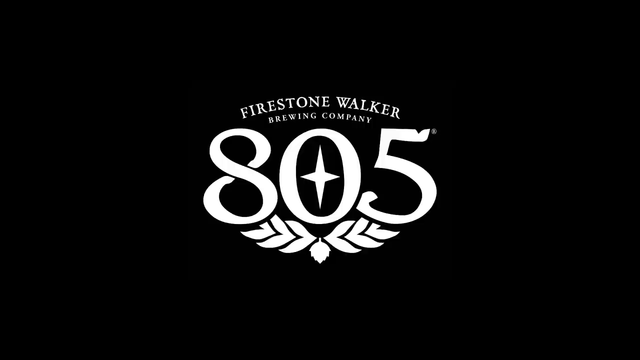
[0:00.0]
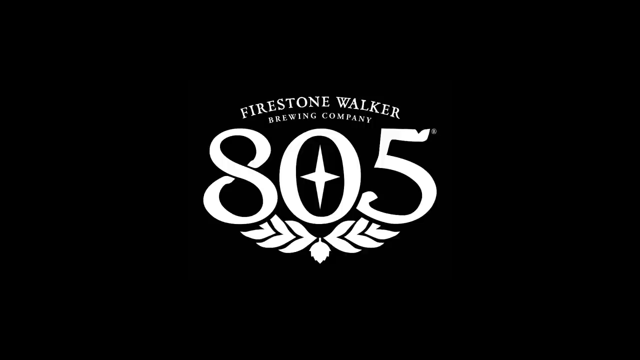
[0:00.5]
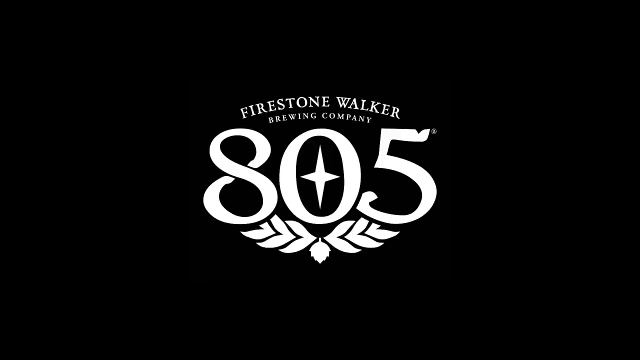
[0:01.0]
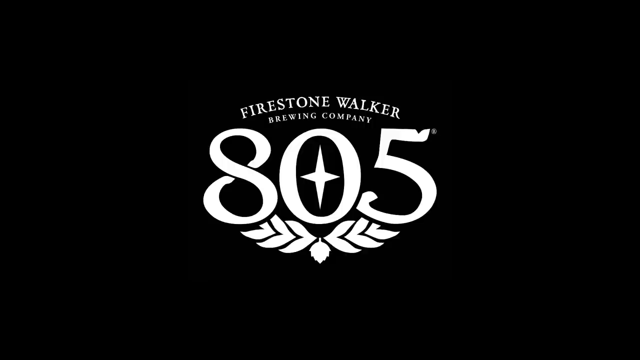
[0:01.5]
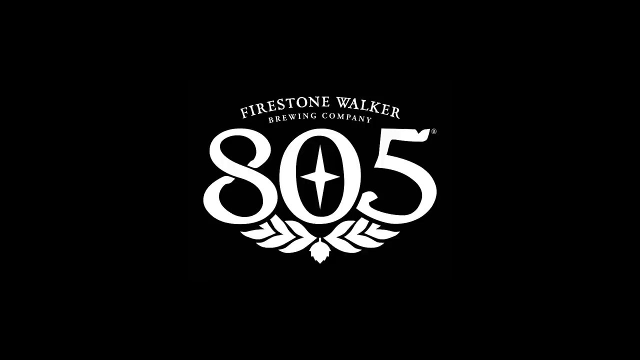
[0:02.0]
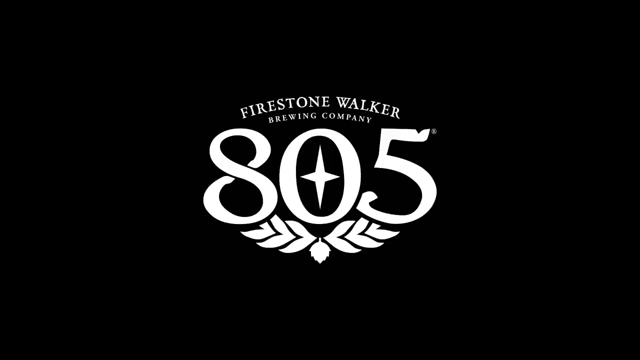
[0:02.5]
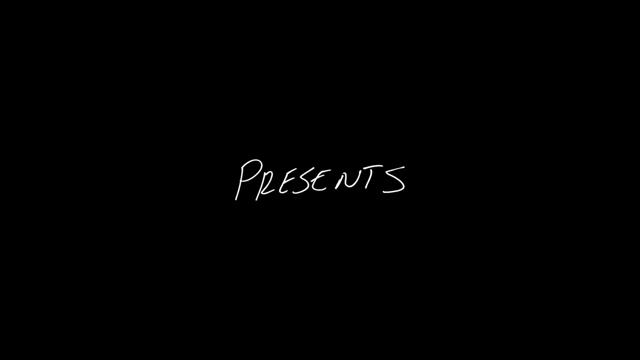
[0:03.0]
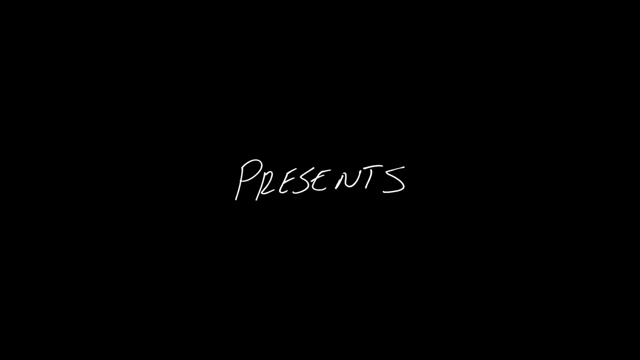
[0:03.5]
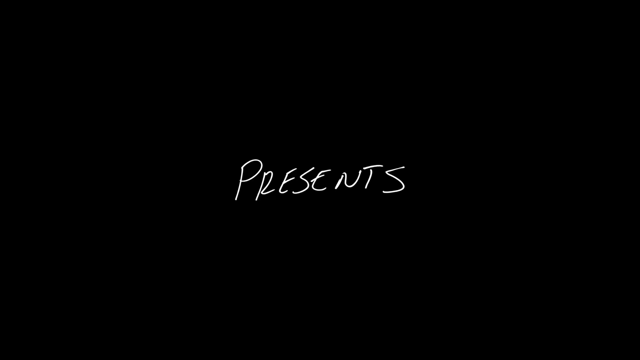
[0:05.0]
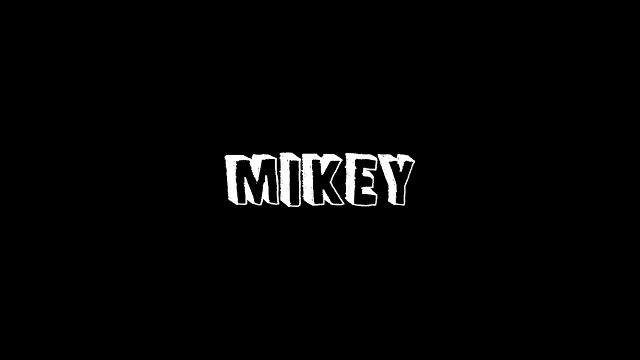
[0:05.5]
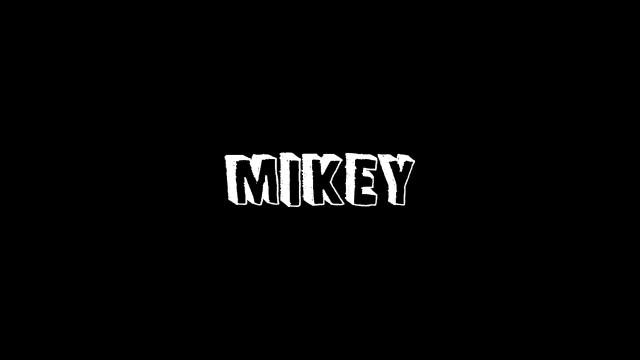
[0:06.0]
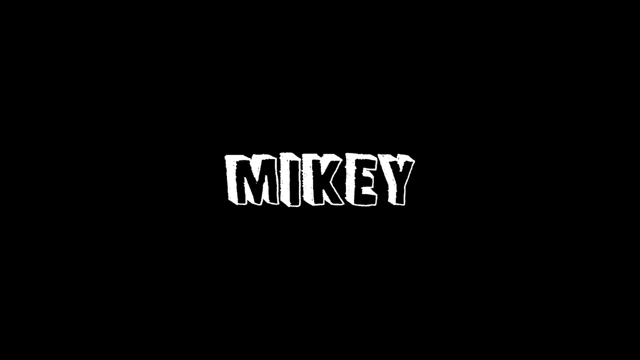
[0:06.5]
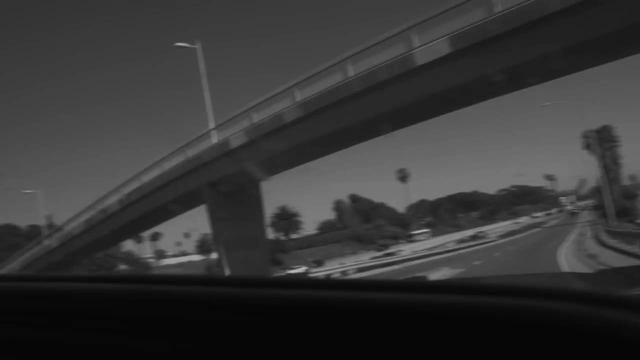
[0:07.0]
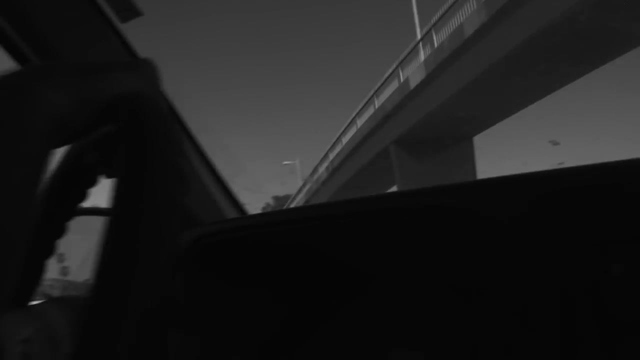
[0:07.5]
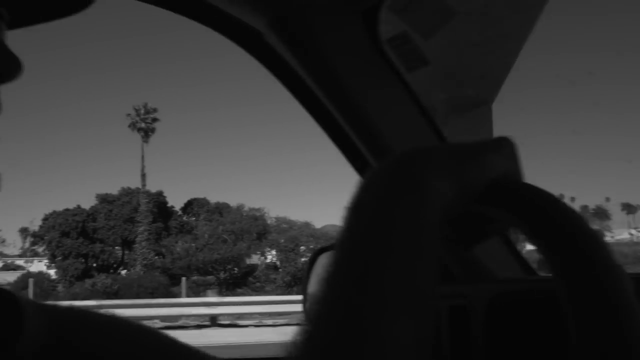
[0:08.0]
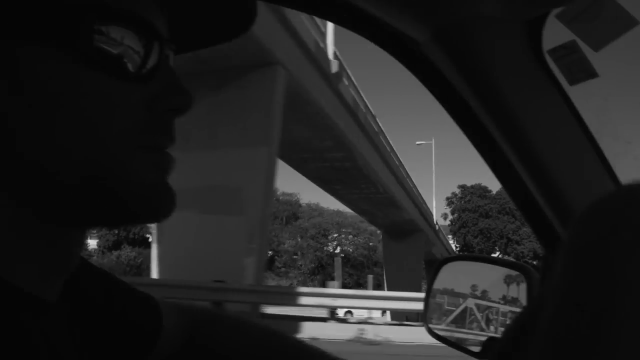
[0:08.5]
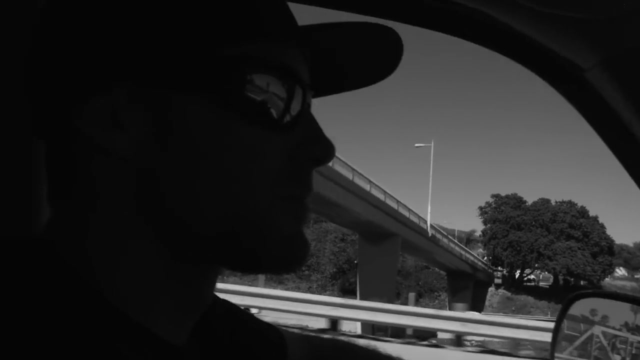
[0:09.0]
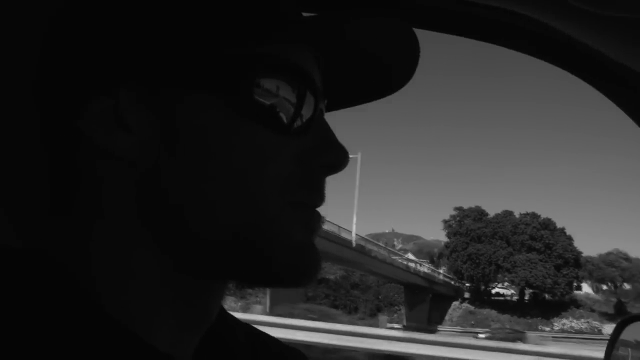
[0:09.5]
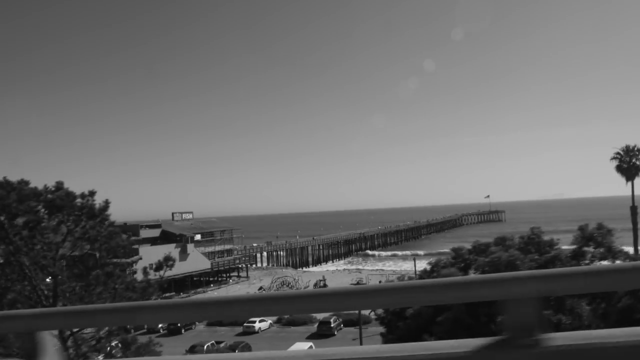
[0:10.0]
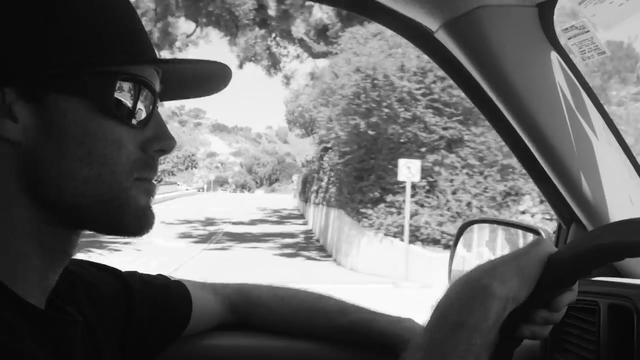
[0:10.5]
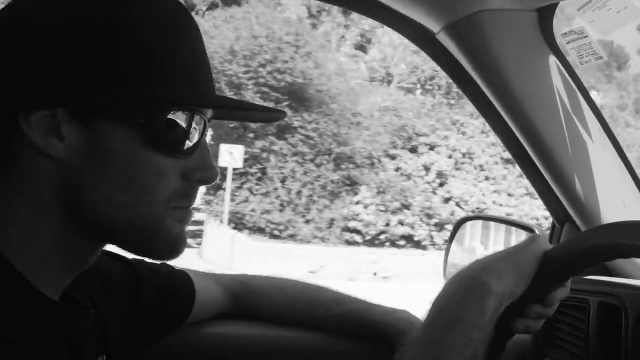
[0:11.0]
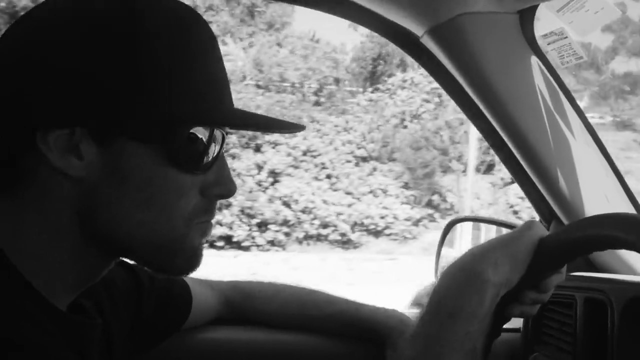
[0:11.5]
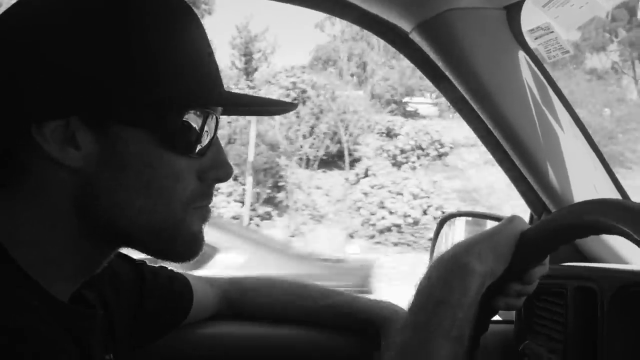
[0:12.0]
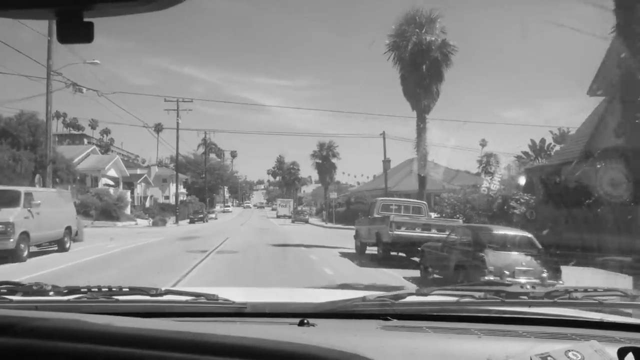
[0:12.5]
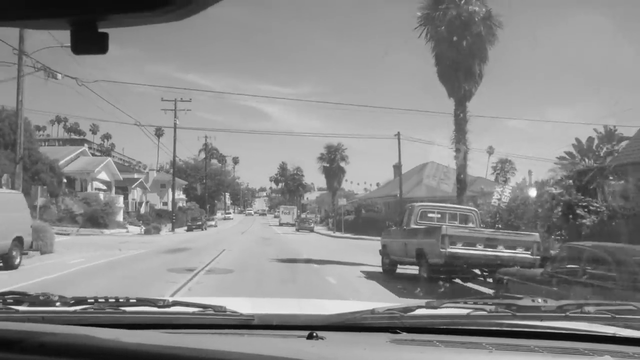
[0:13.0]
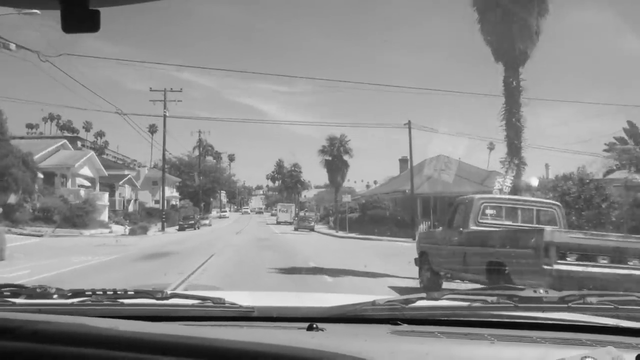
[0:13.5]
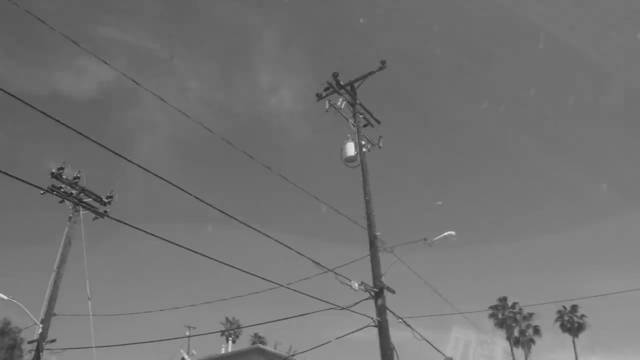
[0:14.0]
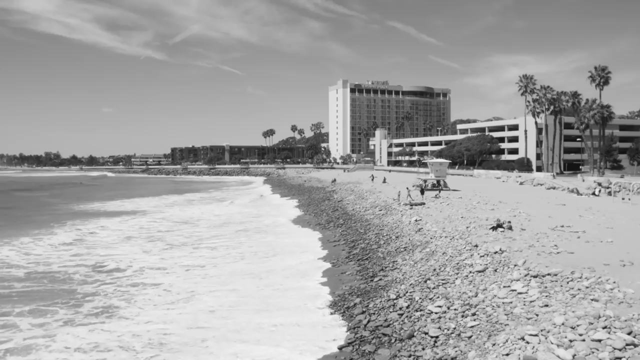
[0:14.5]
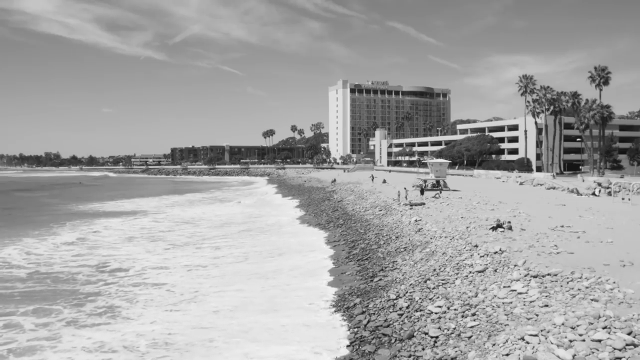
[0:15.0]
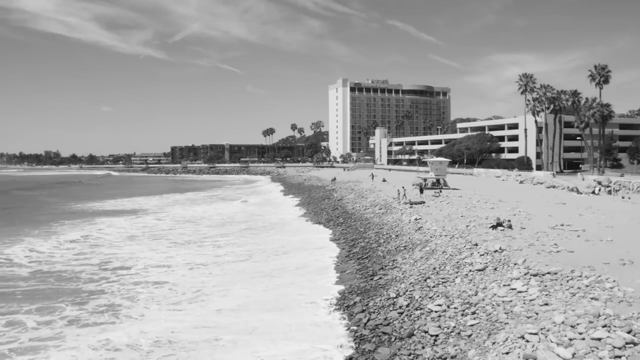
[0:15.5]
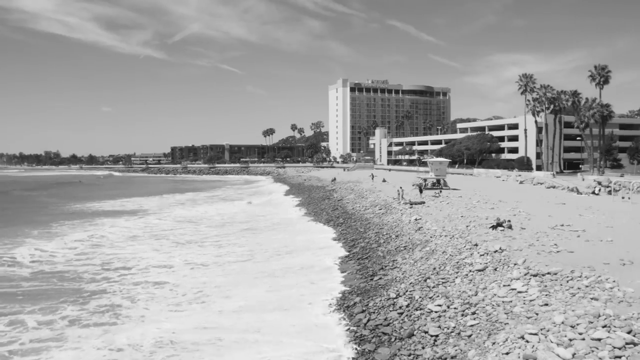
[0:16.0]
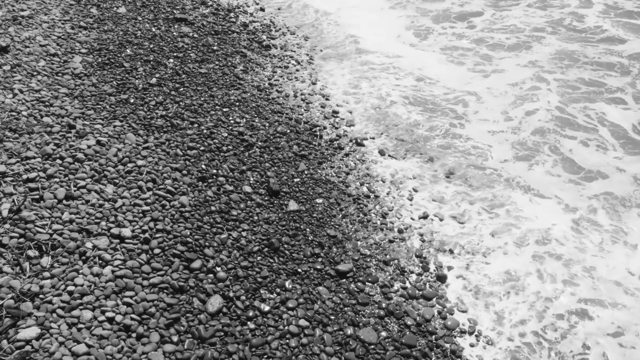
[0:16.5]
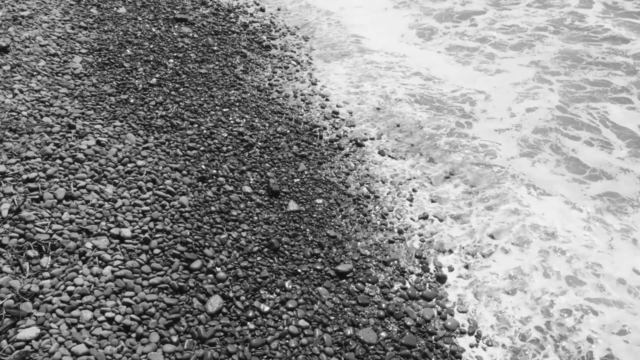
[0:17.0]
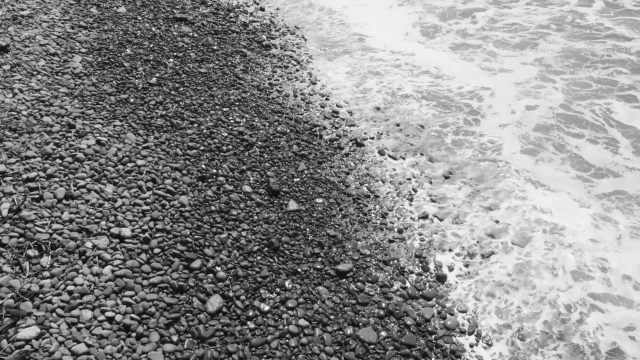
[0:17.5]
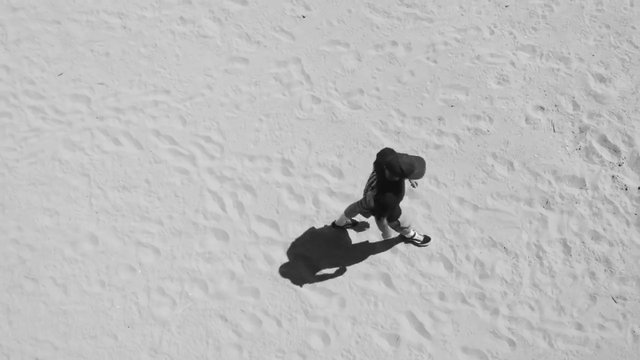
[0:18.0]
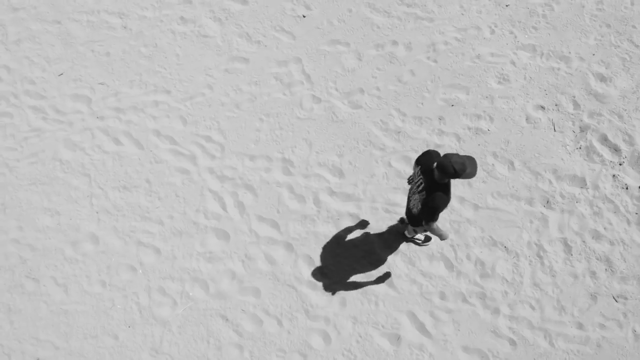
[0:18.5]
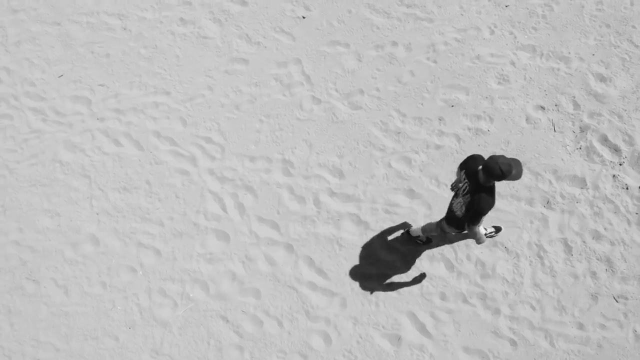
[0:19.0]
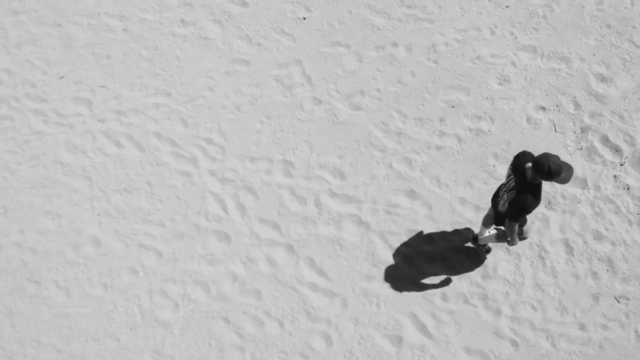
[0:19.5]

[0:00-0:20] The video is in red. It opens on a black screen with the number 805, with what looks like a plus sign in the middle of the zero, and below it what looks like a leaf hanging downward with some leaves to the left and right as part of the logo. Above it the text reads "Firestone Walker" and below it "Brewing Company." Next the word "PRESENTS" appears in all caps, followed by the word "MIKEY" in a different font, also in all caps. Someone drives down the road, recording through the front windshield with a camera. The car drives under a bridge and the camera immediately pans to the left, showing the steering wheel and the silhouette of a male driver wearing sunglasses and a baseball cap. Out the driver's side window is the same bridge they just drove under, and there is a guardrail on the left side of the road. The scene changes to a pier at a beach seen while someone drives down the road: the guardrail, a tree, waves crashing on the shore, a flag near the end of the pier, and people on the pier. It returns to the same man driving with his sunglasses on, holding his camera and showing mostly his profile. The front view out of the car shows a residential area with cars, trucks and vans parked on the side of the road, telephone poles crossing the road and running alongside it, palm trees, and the sky. Another shot shows the beach with a rocky shore, a lifeguard tower, and a hotel in the background.